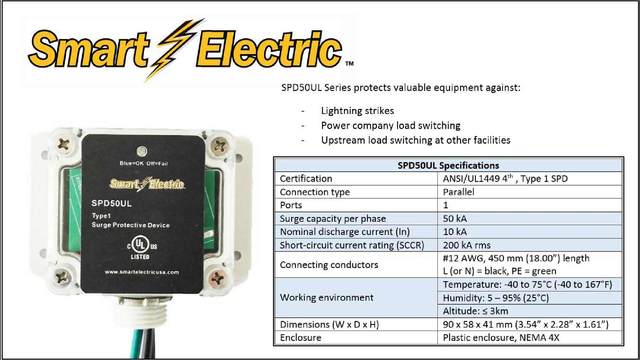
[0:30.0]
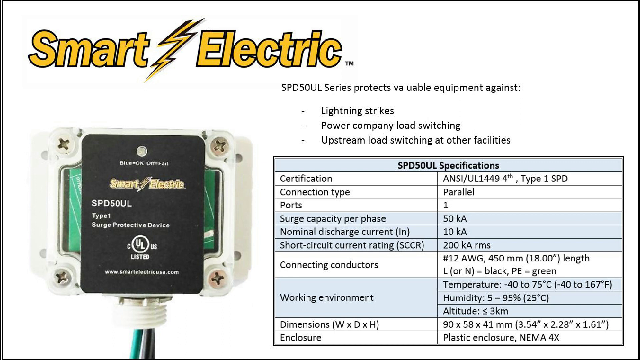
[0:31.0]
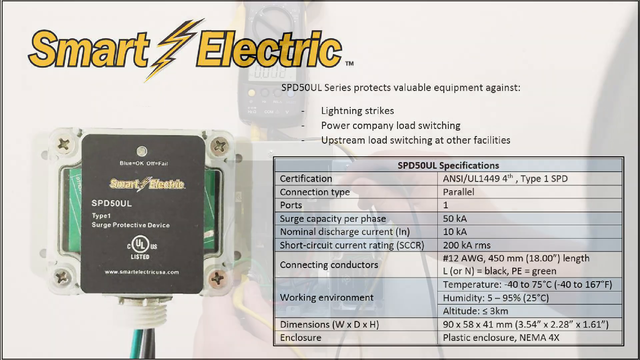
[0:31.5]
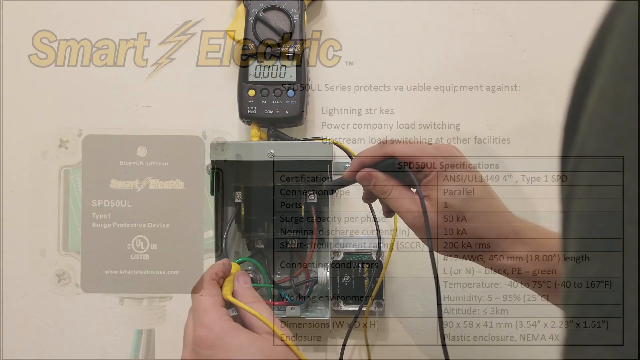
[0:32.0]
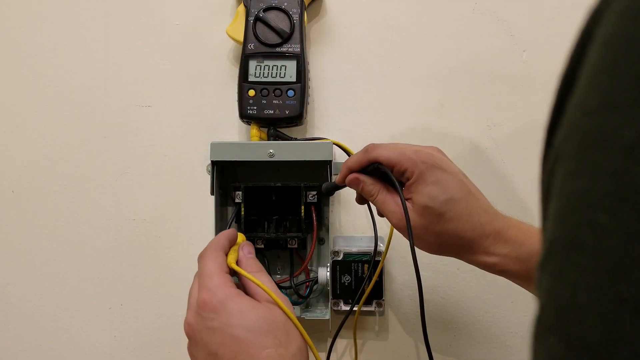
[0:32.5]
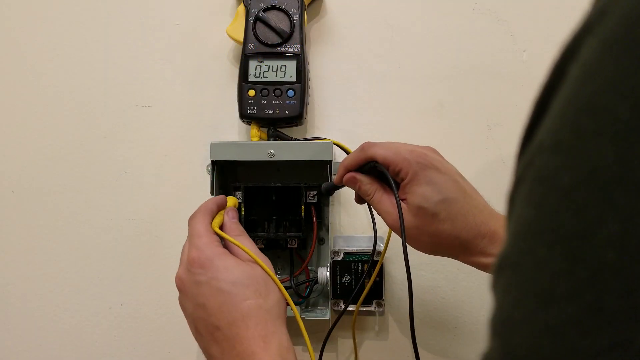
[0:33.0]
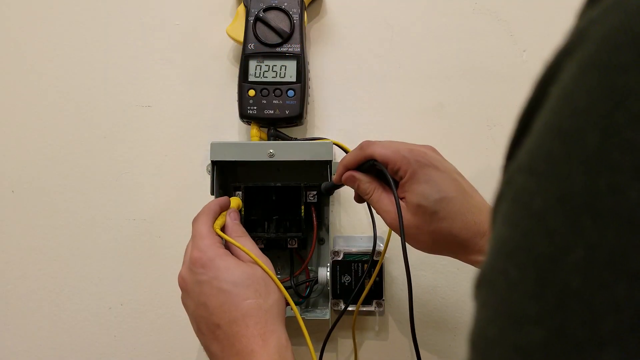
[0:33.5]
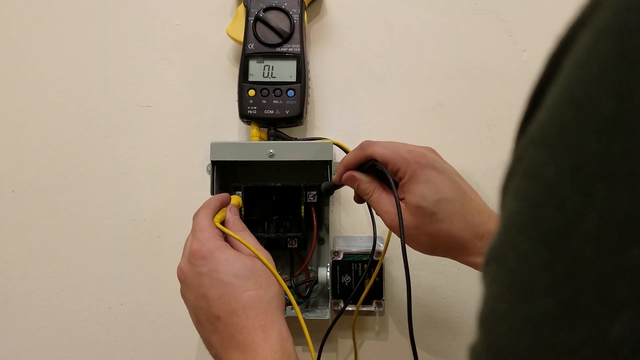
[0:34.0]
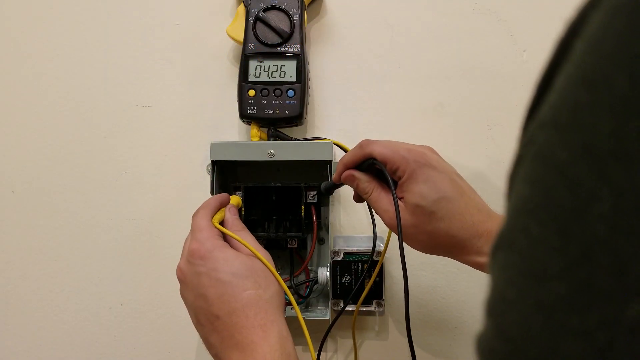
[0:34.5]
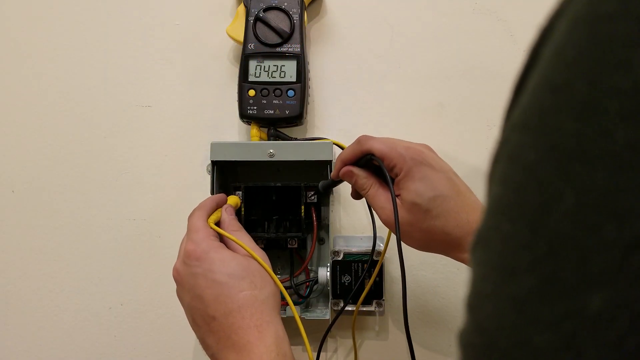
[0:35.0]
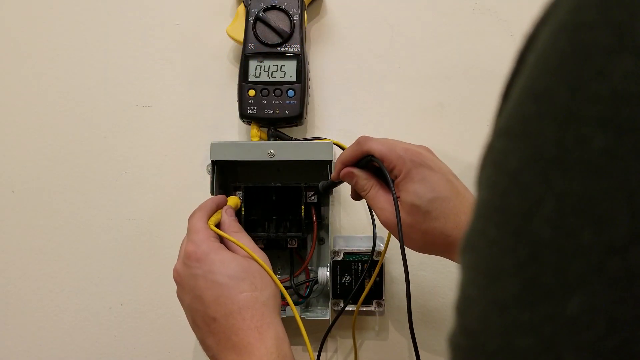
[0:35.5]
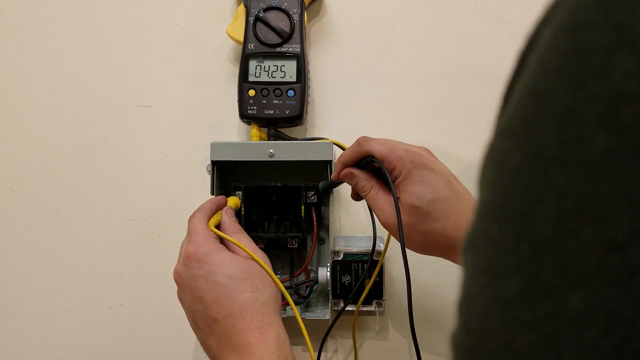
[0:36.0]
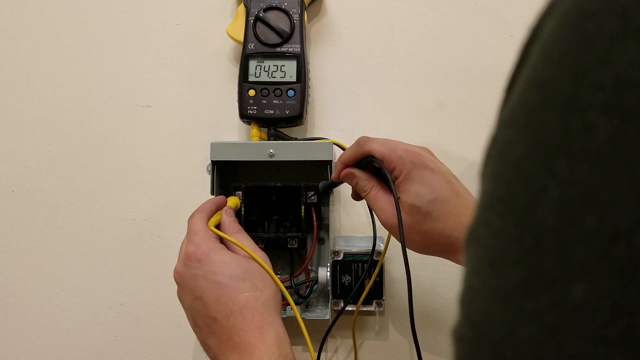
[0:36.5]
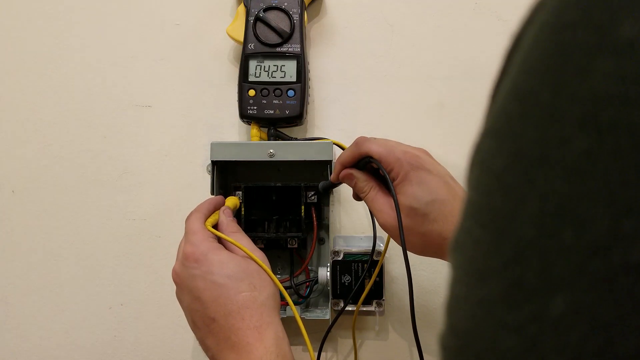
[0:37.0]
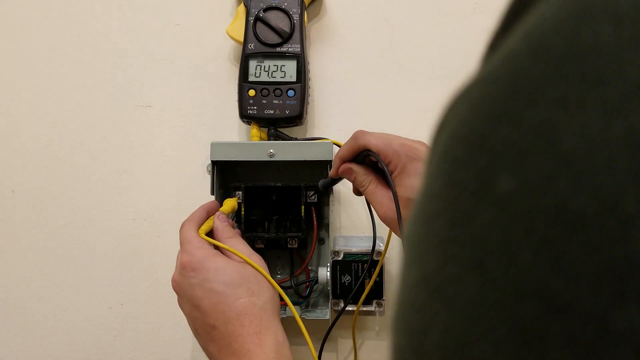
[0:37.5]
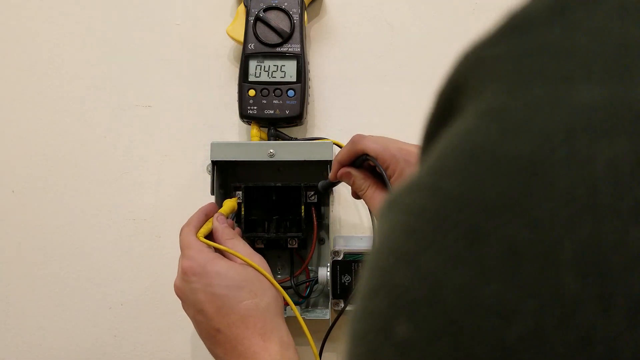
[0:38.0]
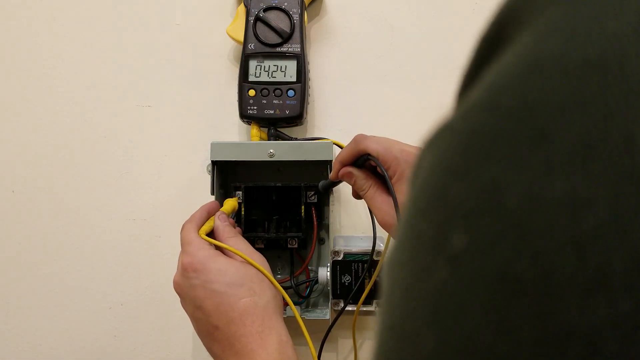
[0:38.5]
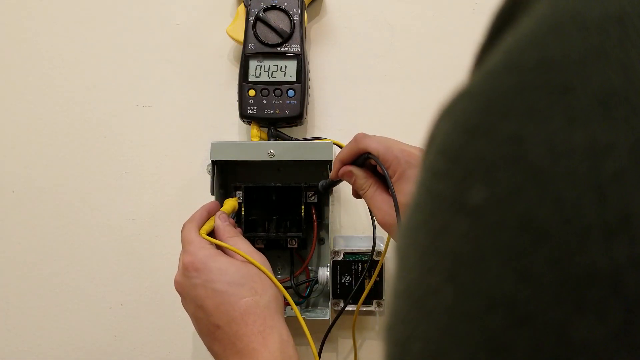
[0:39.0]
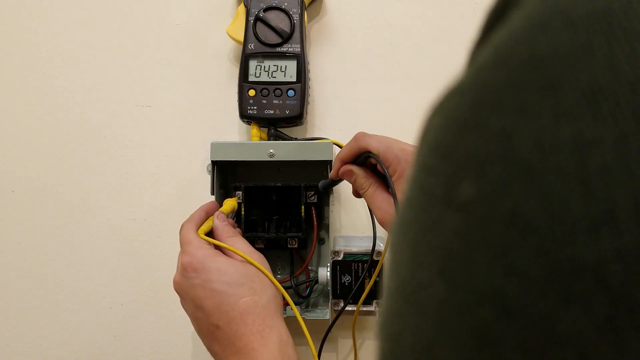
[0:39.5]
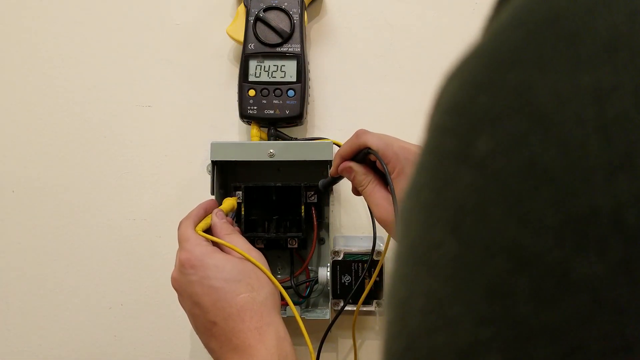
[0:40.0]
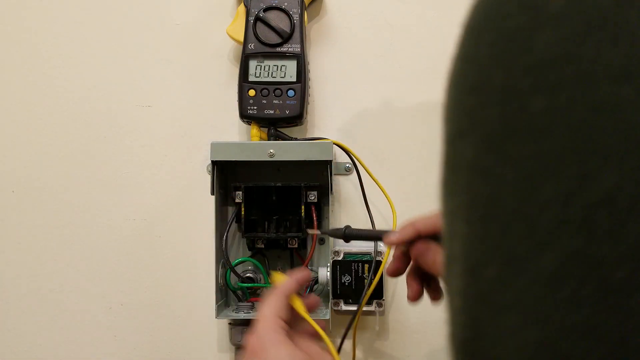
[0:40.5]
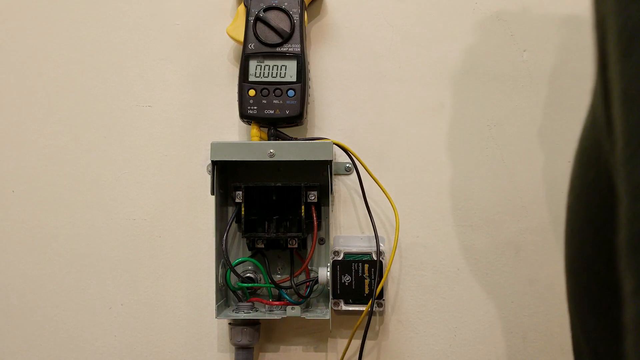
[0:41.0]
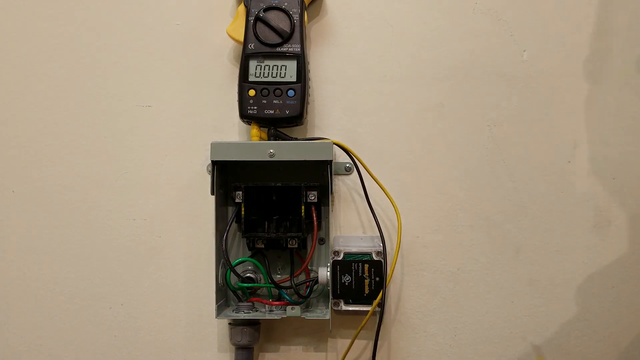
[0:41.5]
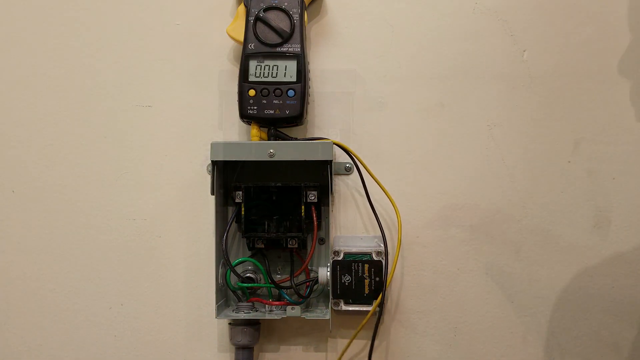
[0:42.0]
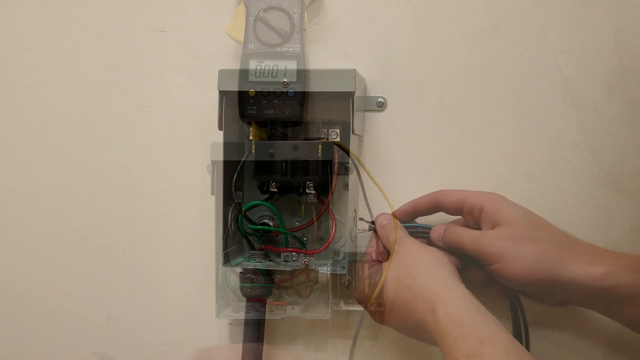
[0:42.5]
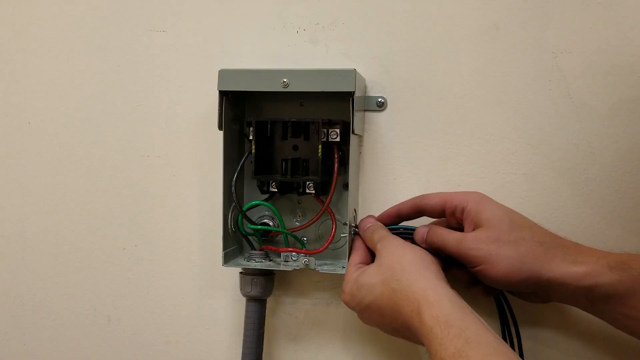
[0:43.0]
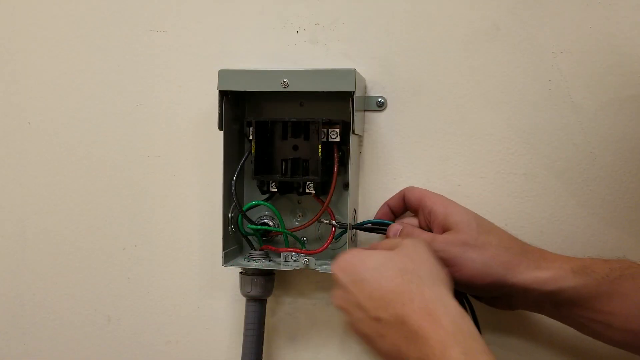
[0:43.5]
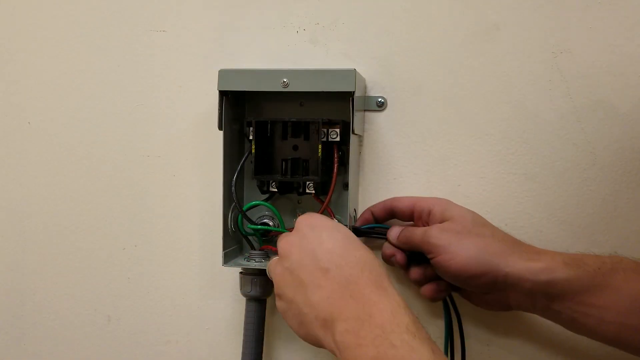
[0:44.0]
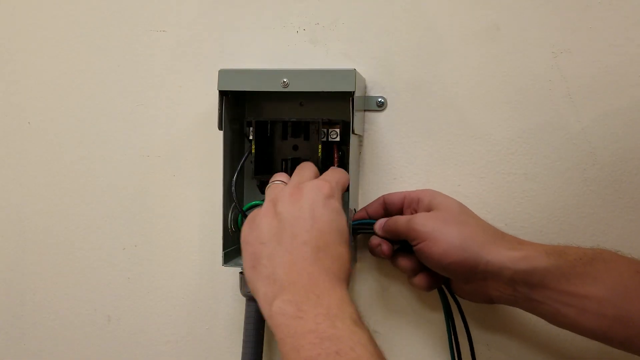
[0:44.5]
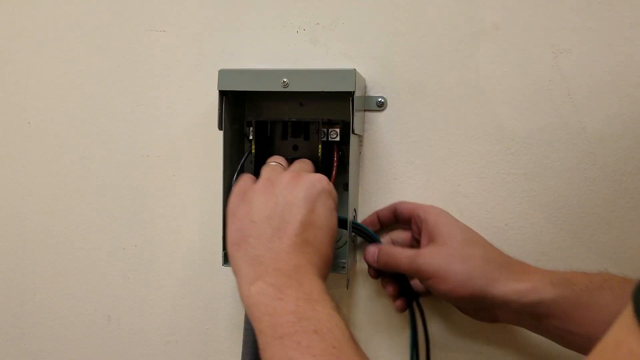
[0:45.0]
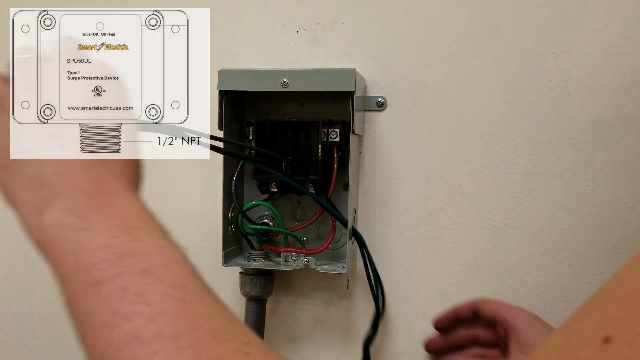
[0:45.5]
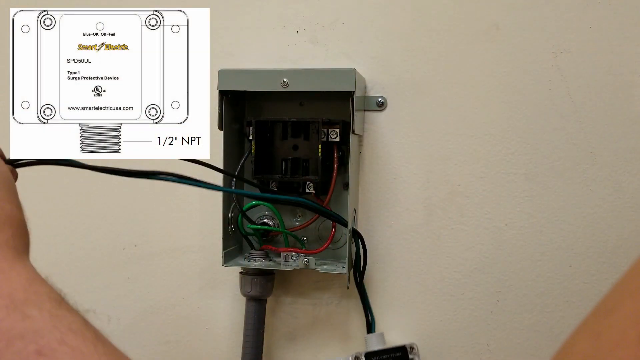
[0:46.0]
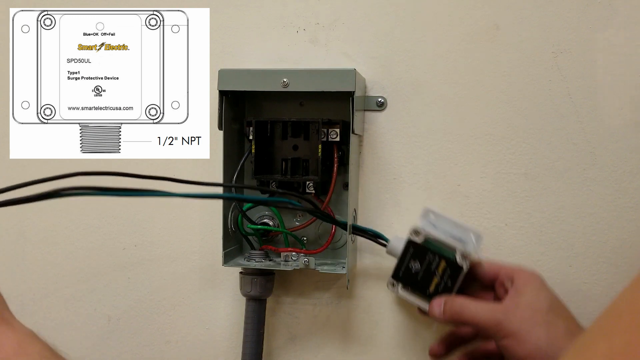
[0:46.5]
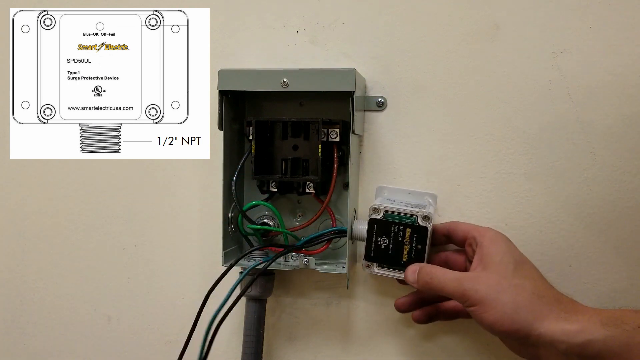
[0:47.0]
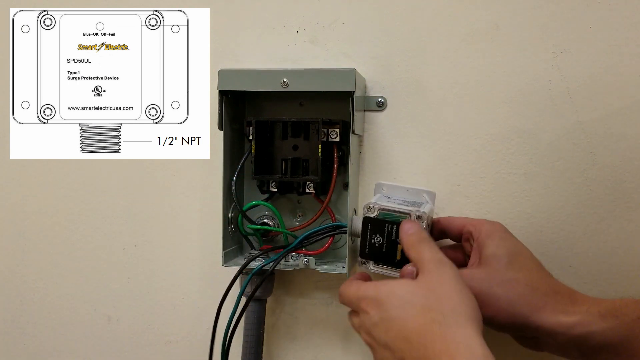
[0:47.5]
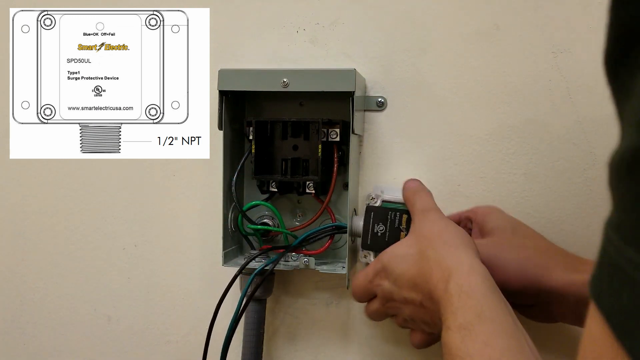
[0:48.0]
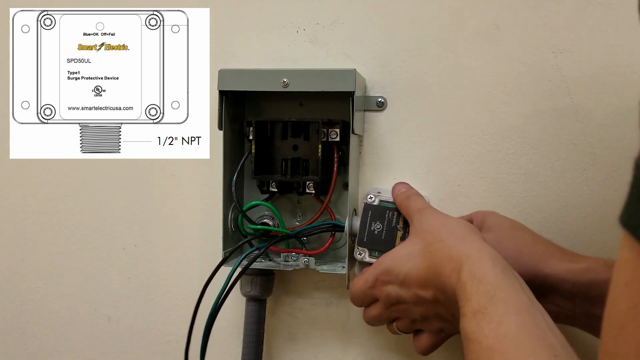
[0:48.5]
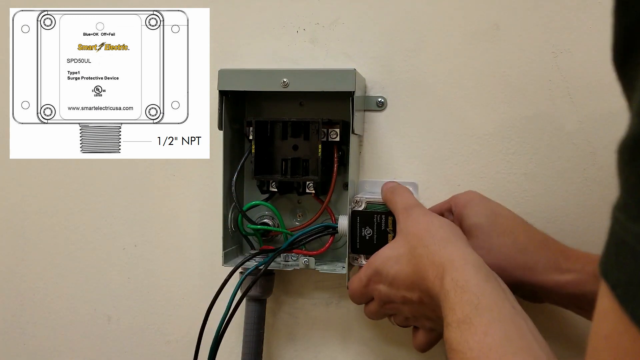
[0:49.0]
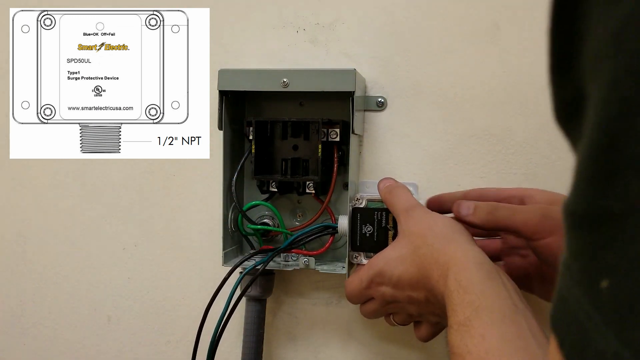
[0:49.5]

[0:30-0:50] The table stays on screen for a few more seconds before the next shot, a recording of someone installing the surge protective device. A panel is shown; the man is off screen except for his hands and a little of his body. His right hand holds a black wire with a metal tip and his left hand holds a similar yellow wire with a metal tip, and he presses them against the panel at some points. Above the panel is a device with readings on it; once he presses and moves away, the device at the top reads zero. The panel has many black, green and red wires inside it. The next shot shows the panel again without the device above it. He feeds a wire containing black and green wires through a hole in the side of the panel, and at its end is the surge protective device. A graphic overlaid on the video shows the surge protective device and the screw or similar part needed to attach it to the panel.